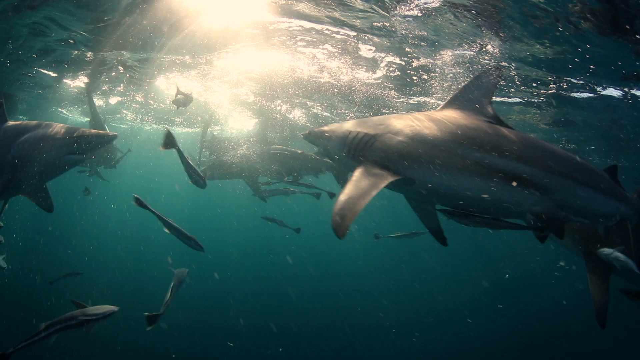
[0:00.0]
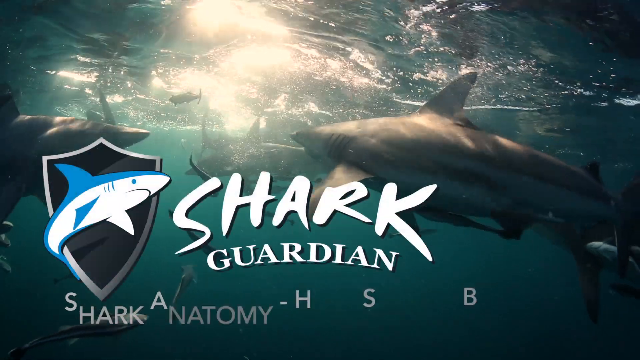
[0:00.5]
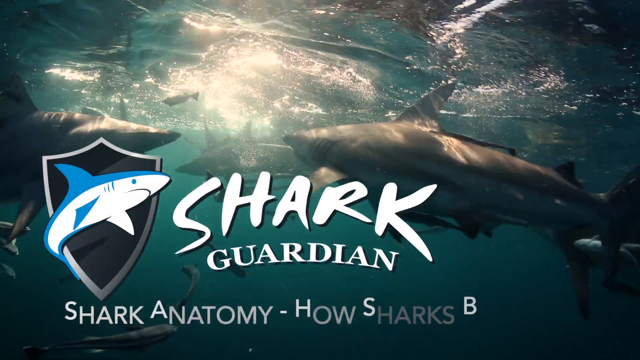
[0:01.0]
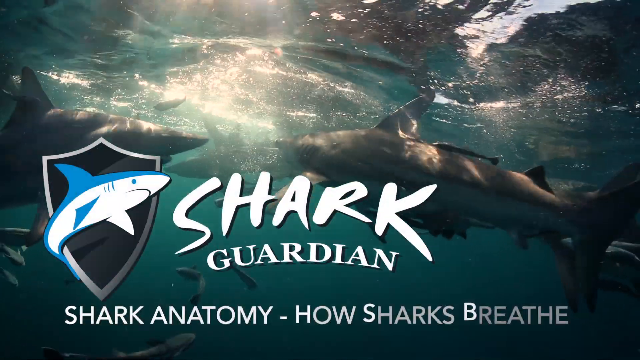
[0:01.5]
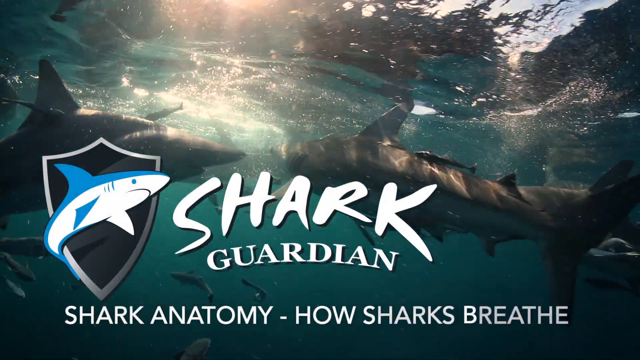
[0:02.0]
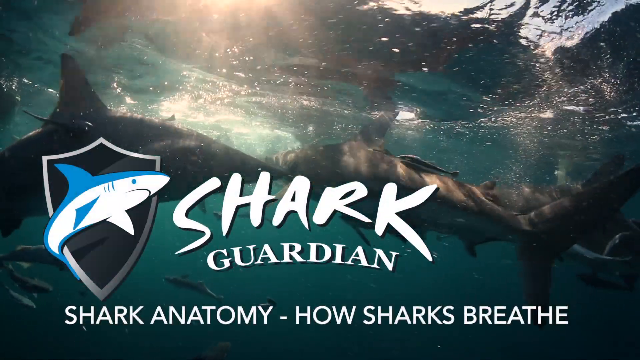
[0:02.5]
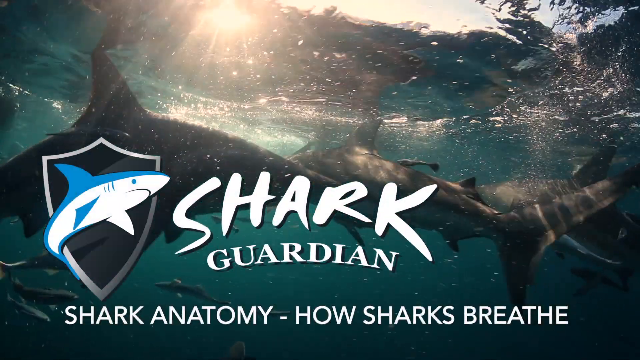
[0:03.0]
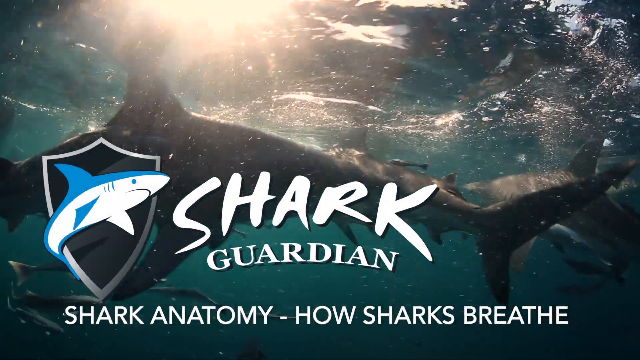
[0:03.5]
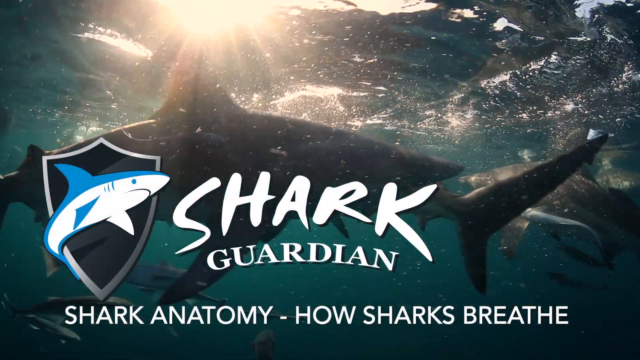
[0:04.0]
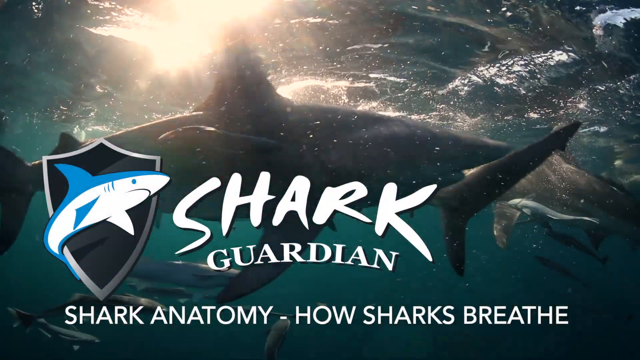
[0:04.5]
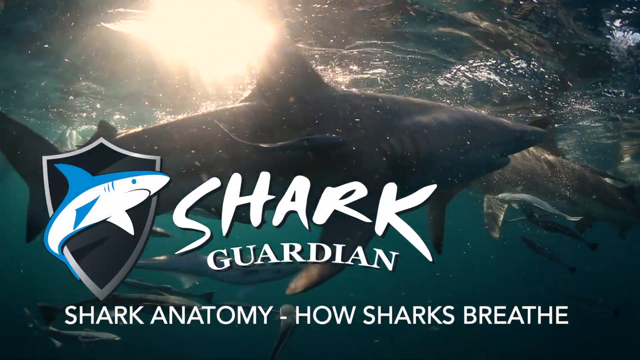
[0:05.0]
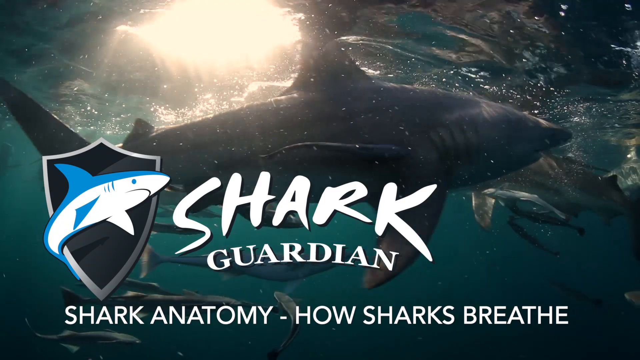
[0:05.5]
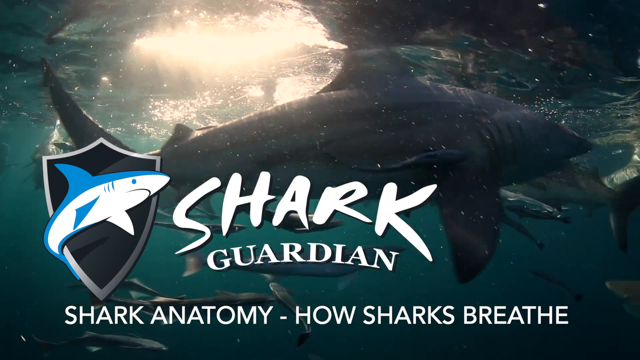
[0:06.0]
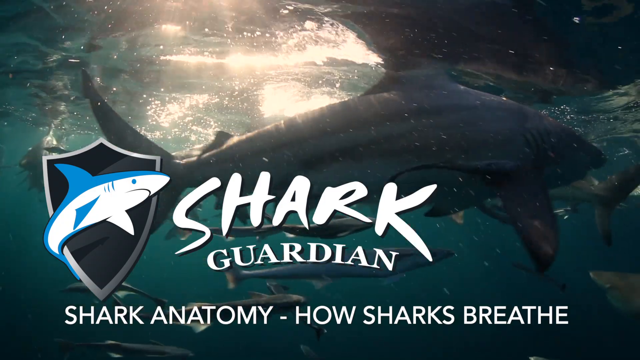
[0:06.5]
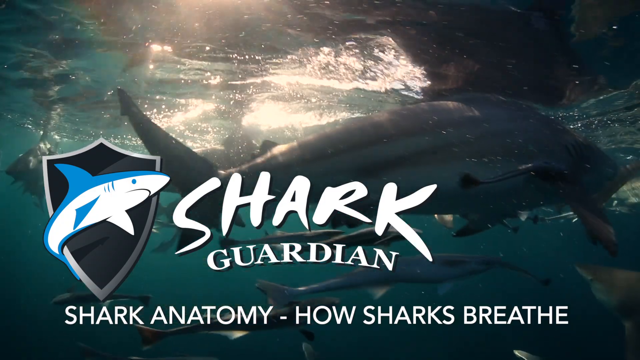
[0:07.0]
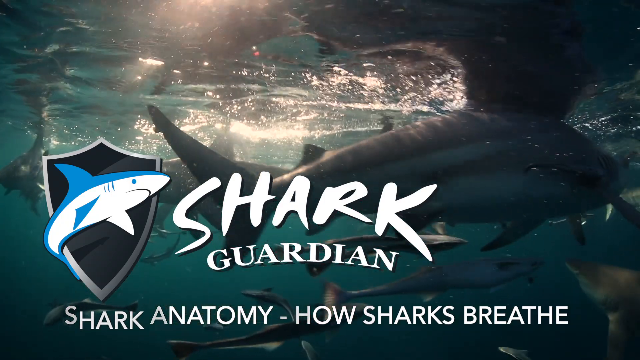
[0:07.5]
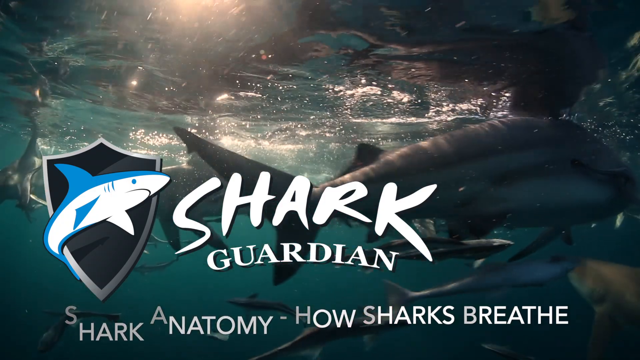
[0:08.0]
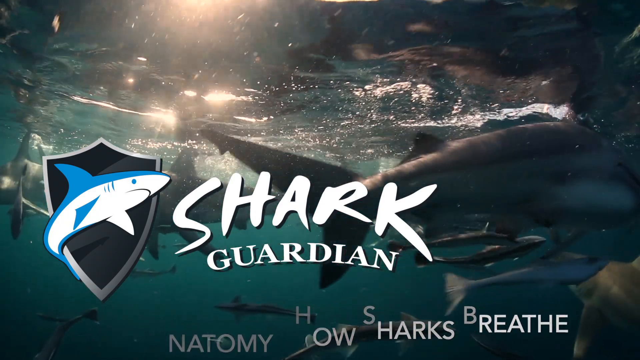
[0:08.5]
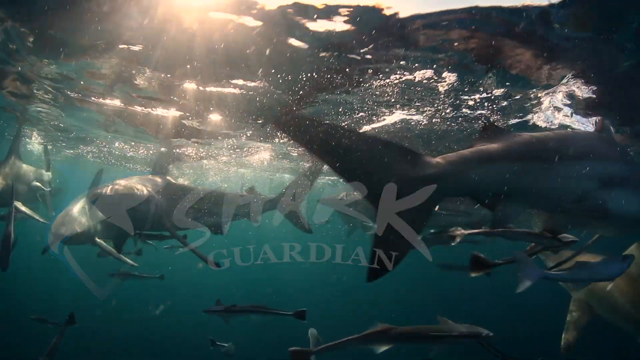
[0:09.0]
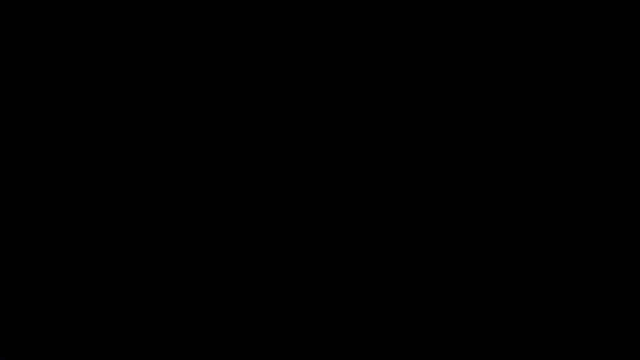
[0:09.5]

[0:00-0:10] The first screen shows the sea, with sharks in the water. On-screen text reads "Shark Guard. Shark Anatomy, how sharks breathes." Many sharks move around the water, going in two different directions. There is one fish, purple in colour. The sharks have long noses and are grey.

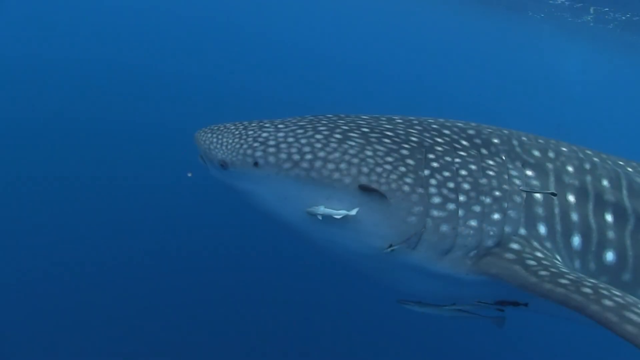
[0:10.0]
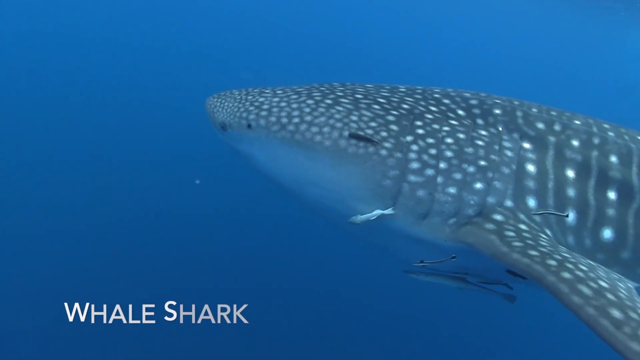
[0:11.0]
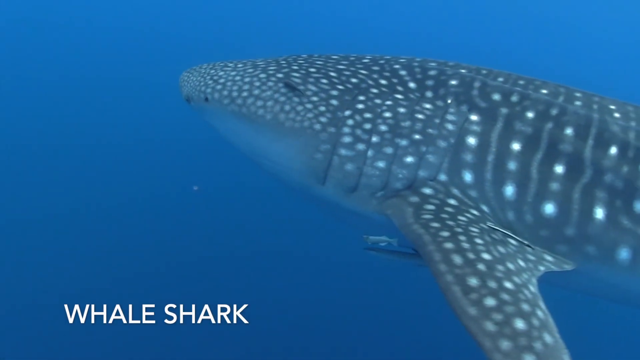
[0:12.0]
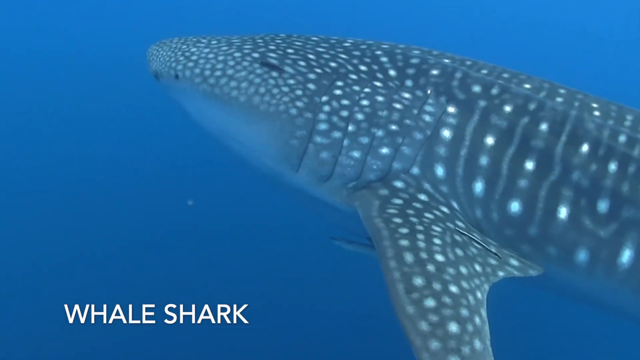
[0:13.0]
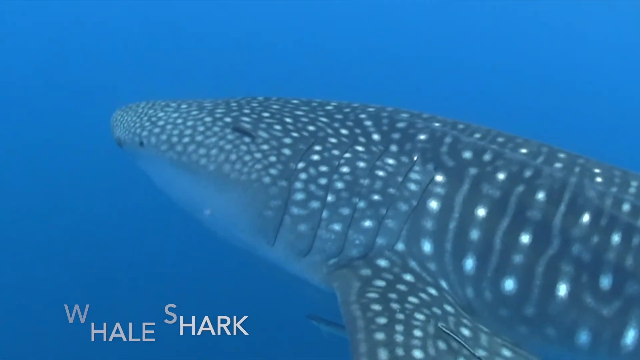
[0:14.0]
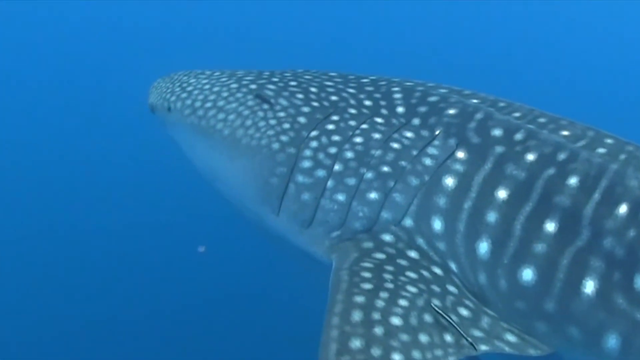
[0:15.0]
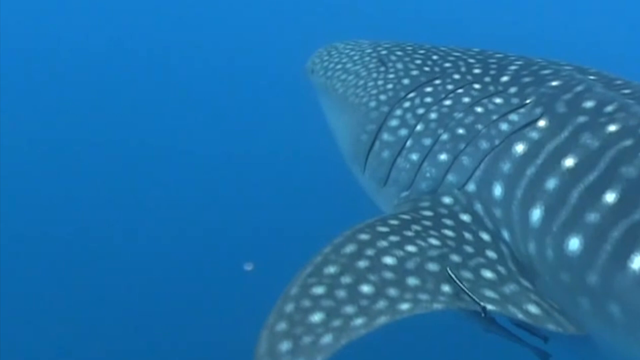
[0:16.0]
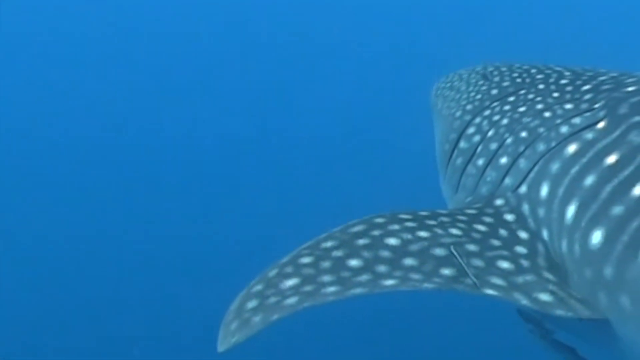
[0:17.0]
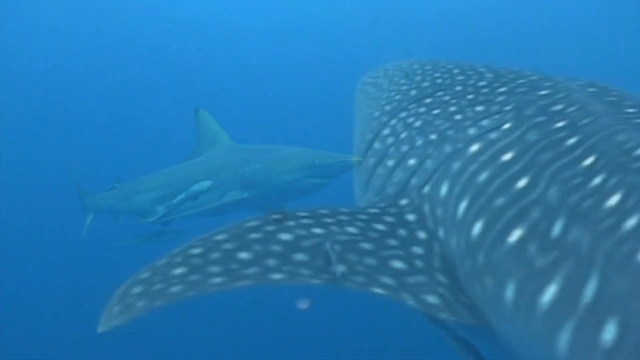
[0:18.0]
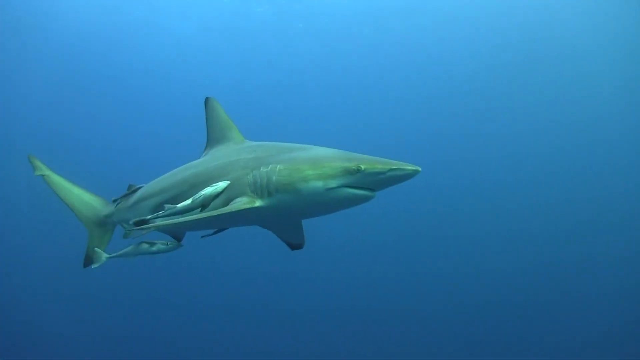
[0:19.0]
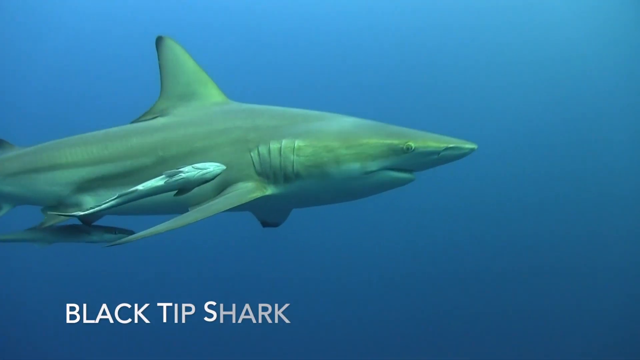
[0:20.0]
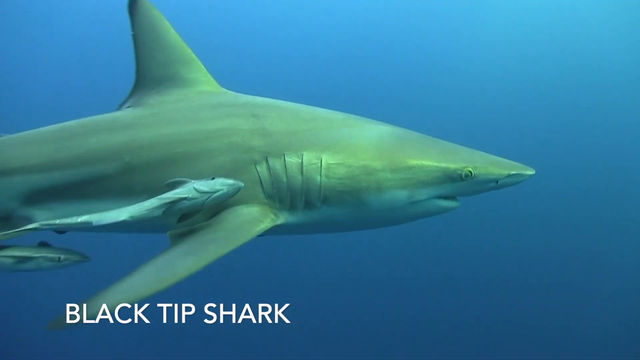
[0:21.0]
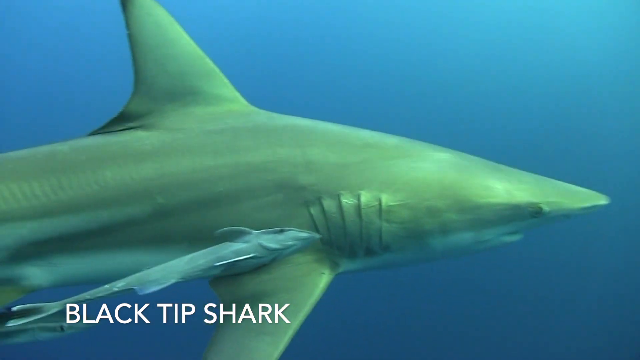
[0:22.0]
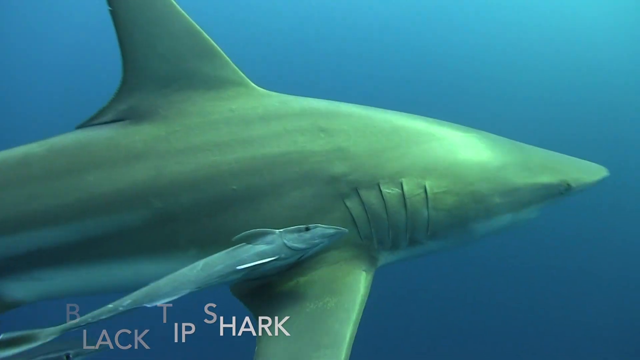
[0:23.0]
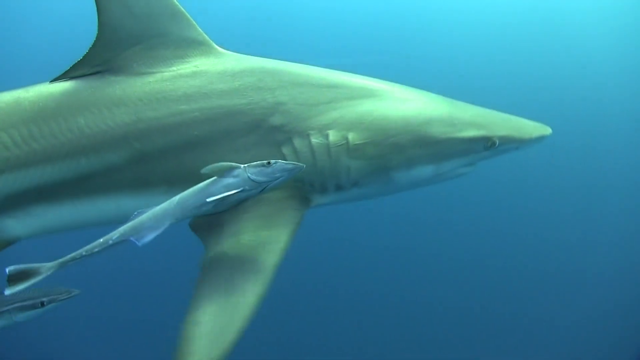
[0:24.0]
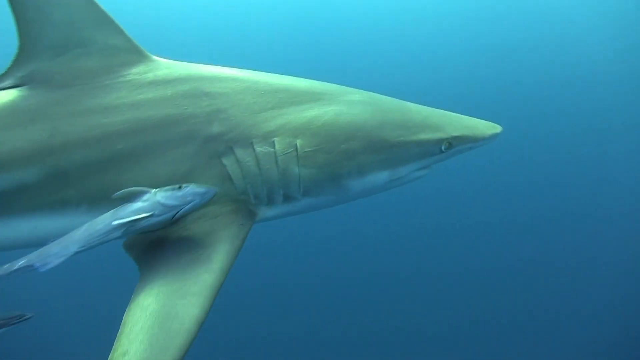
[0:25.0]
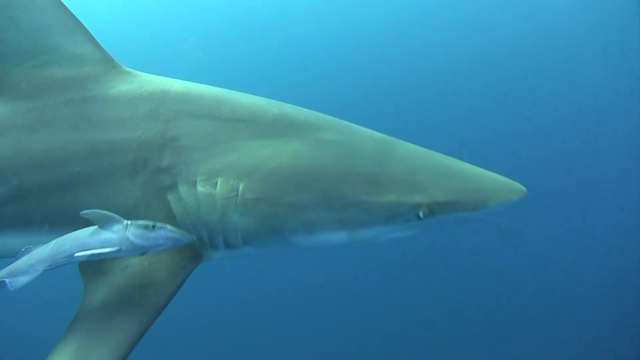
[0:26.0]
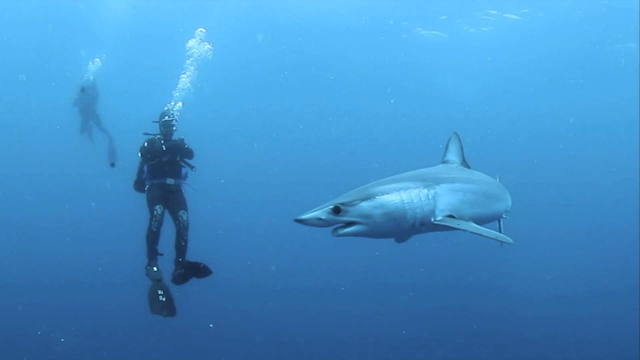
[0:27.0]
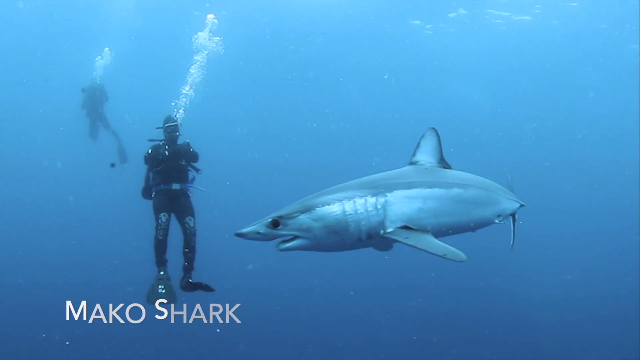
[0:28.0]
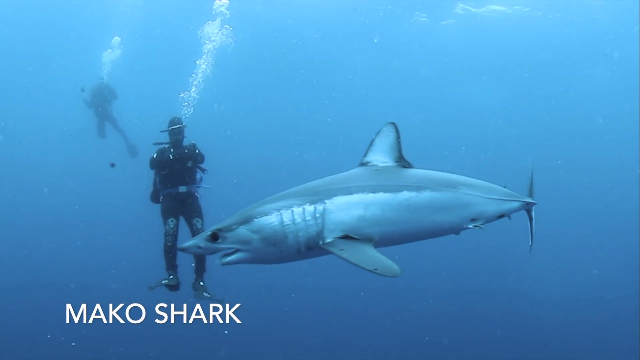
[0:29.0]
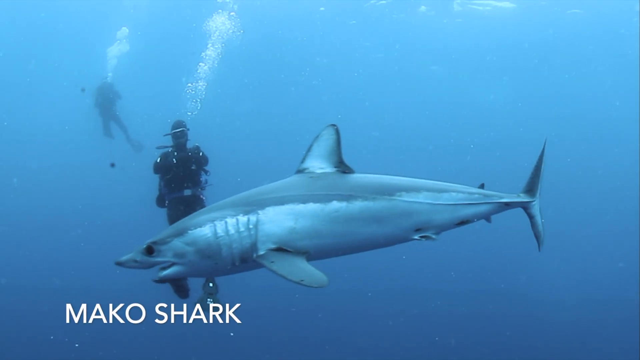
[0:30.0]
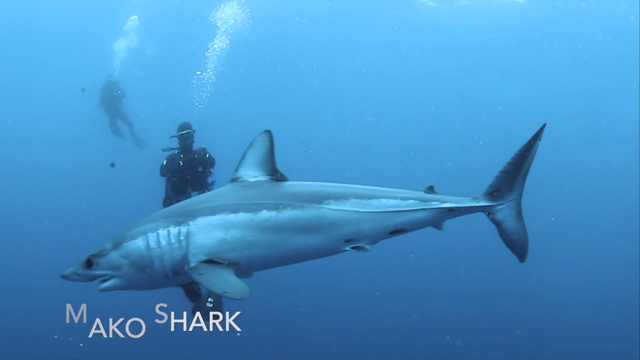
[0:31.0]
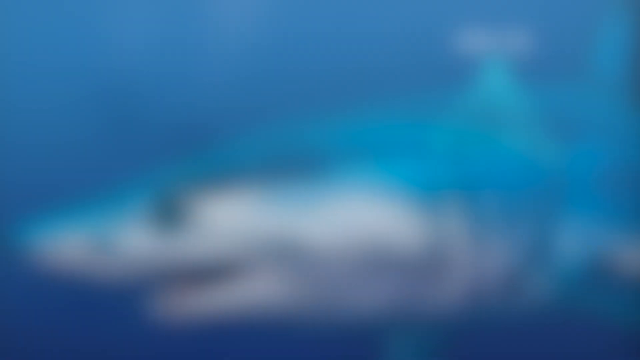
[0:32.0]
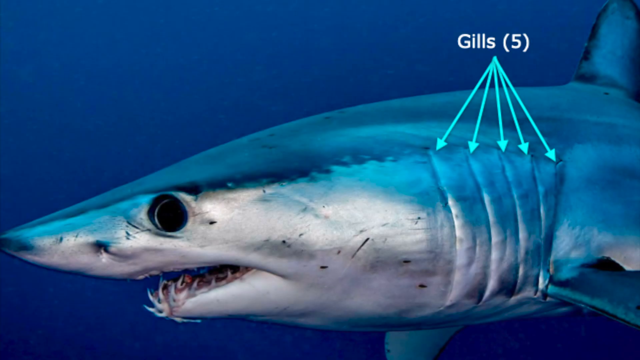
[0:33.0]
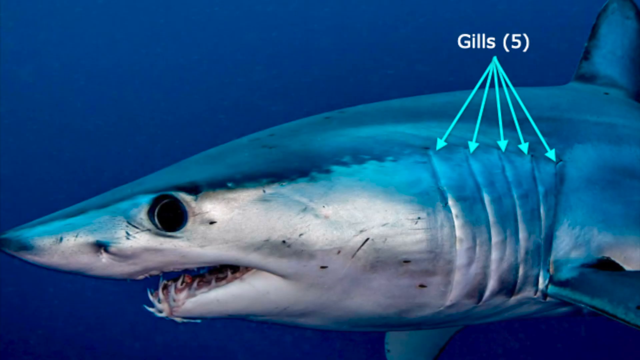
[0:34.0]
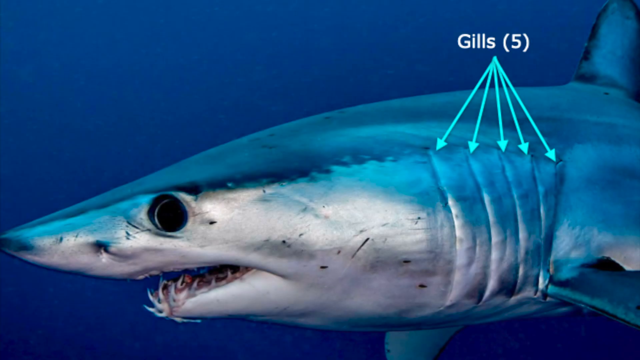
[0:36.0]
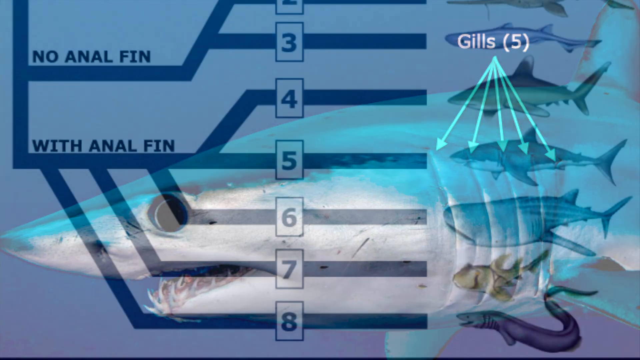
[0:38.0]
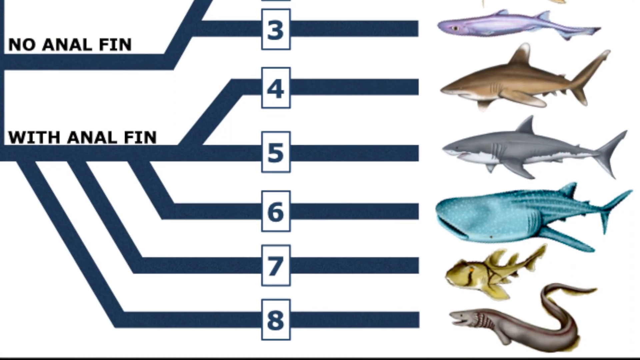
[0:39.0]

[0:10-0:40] A huge shark with dotted markings on its skin appears, the dots perfectly lined all over its body. The view moves to a shark moving across the screen with its babies. Two divers then appear underwater, wearing full diving gear, carrying breathing gas on their backs and wearing long black paddles on their feet, while a shark approaches in their direction. Text at the bottom right identifies it as a Mako shark; the Mako shark has five gills and is blue. The screen slides to the next part, which shows other types of sharks and how they differ in body size and in the features on their bodies.